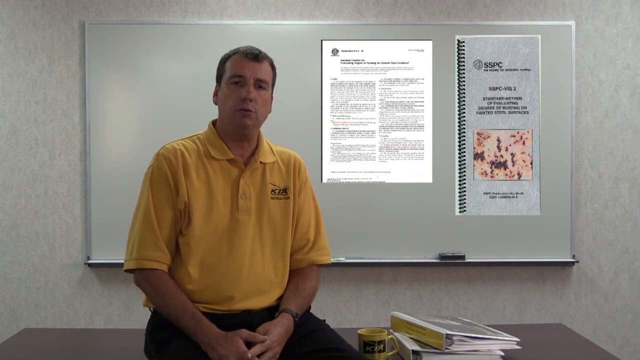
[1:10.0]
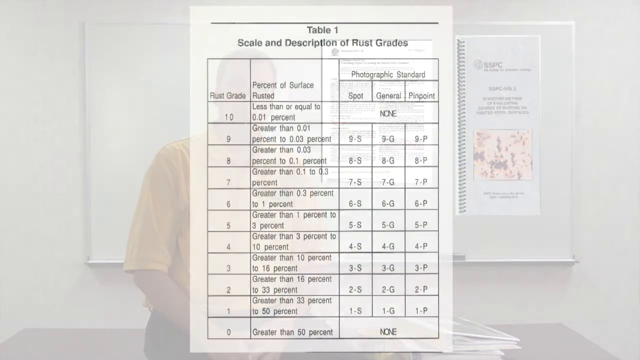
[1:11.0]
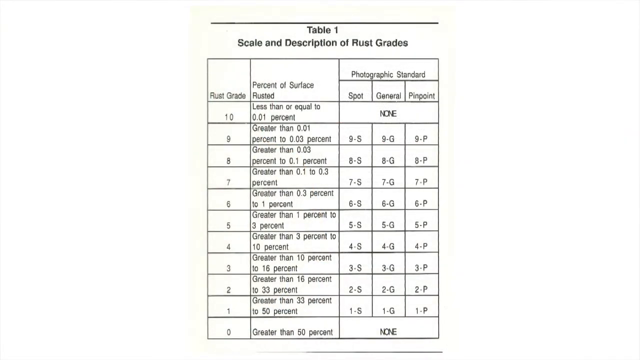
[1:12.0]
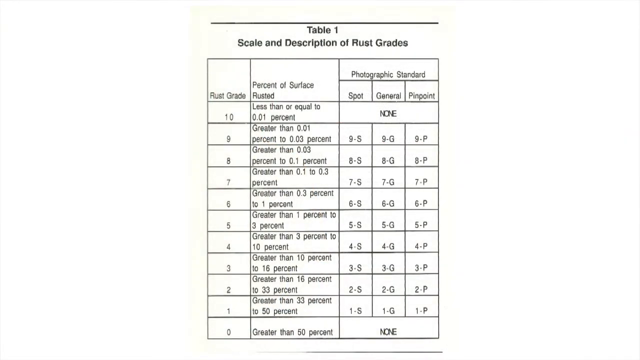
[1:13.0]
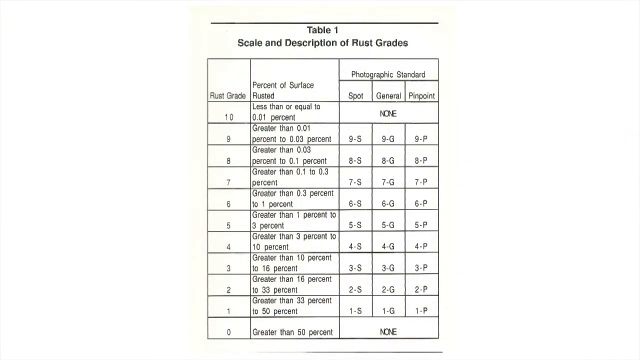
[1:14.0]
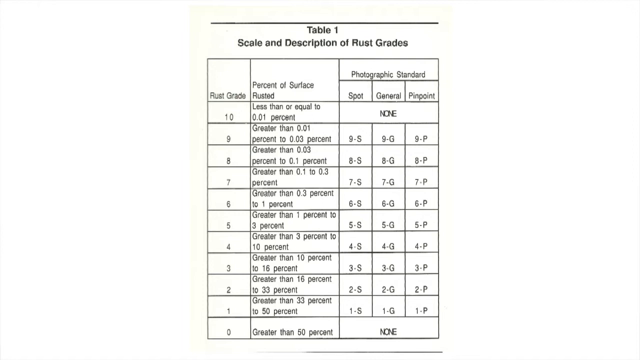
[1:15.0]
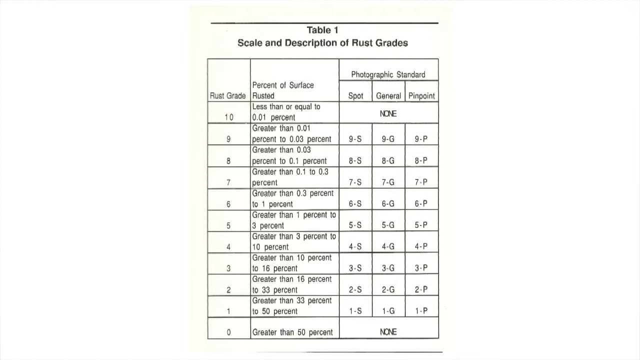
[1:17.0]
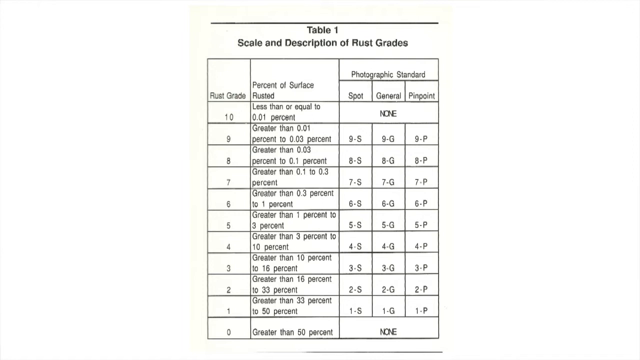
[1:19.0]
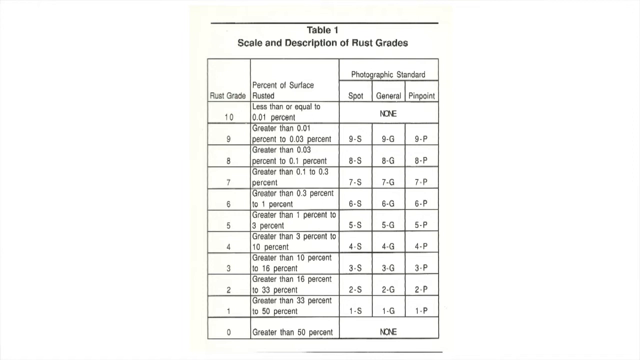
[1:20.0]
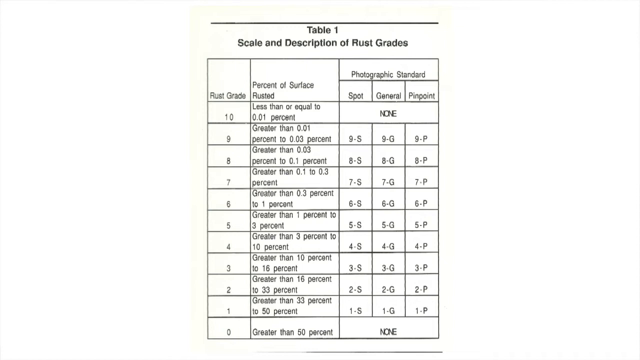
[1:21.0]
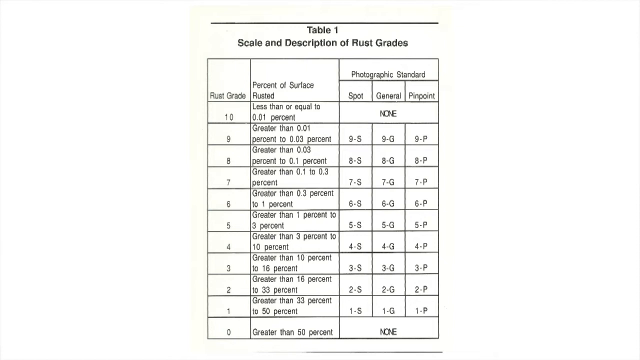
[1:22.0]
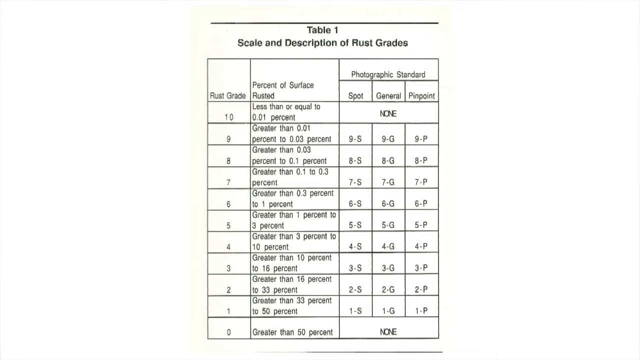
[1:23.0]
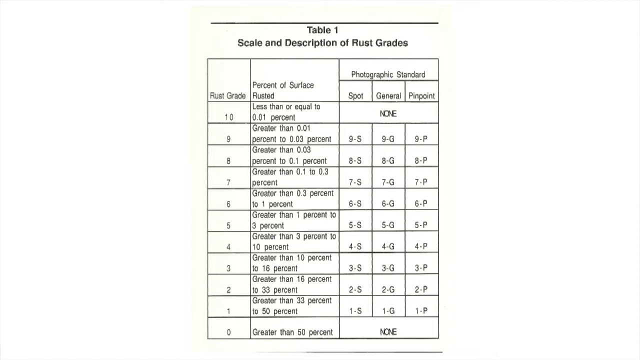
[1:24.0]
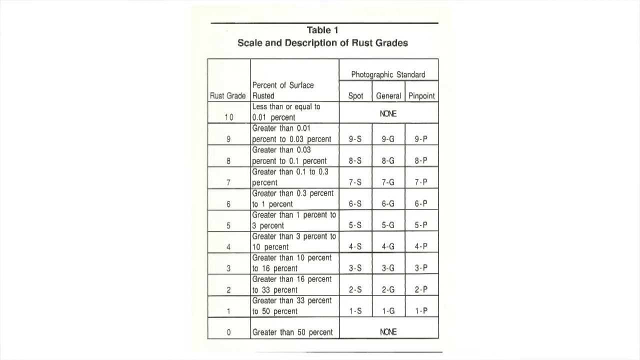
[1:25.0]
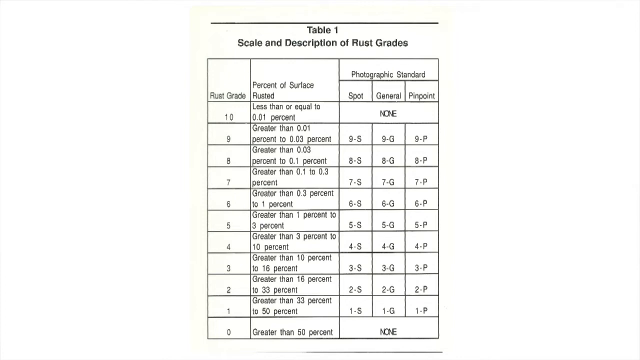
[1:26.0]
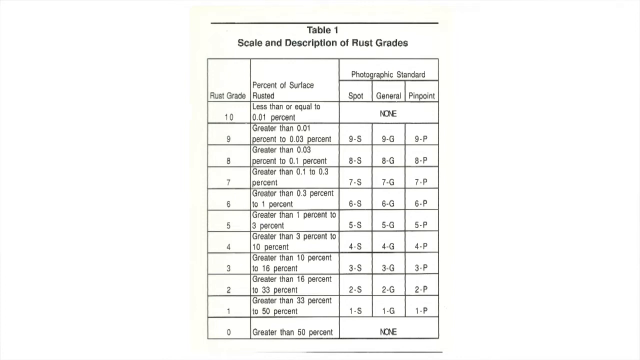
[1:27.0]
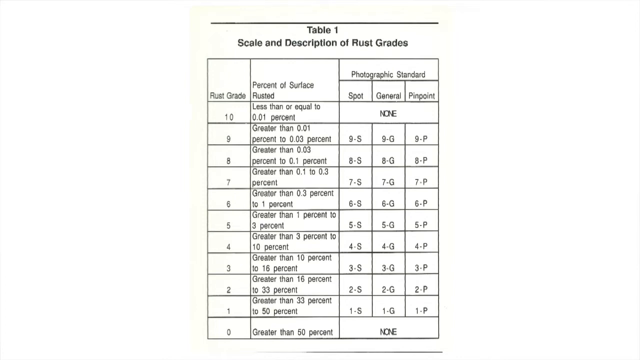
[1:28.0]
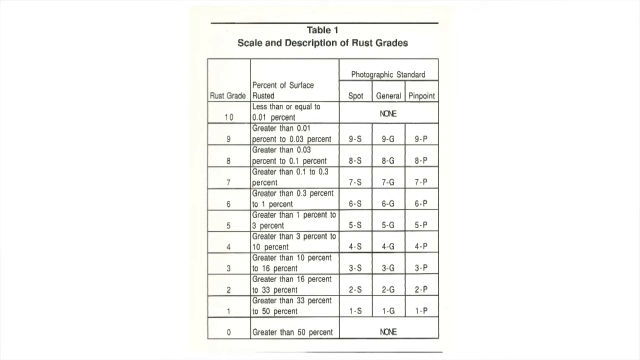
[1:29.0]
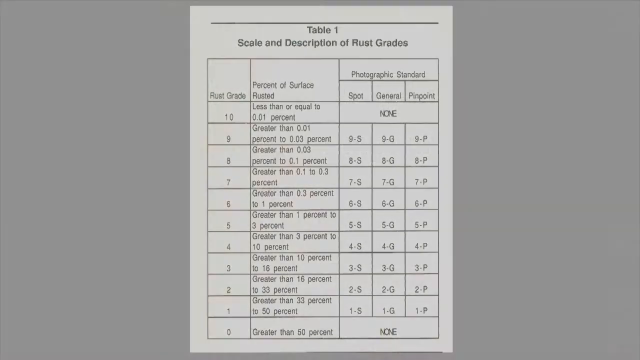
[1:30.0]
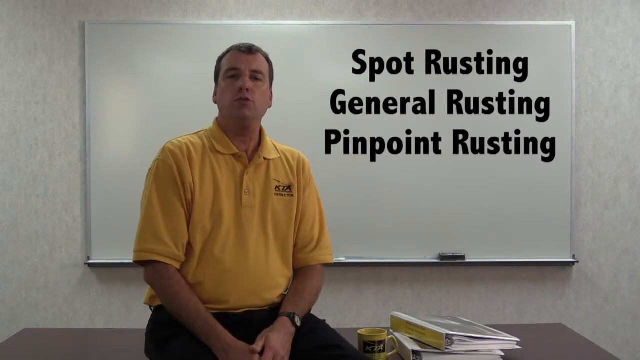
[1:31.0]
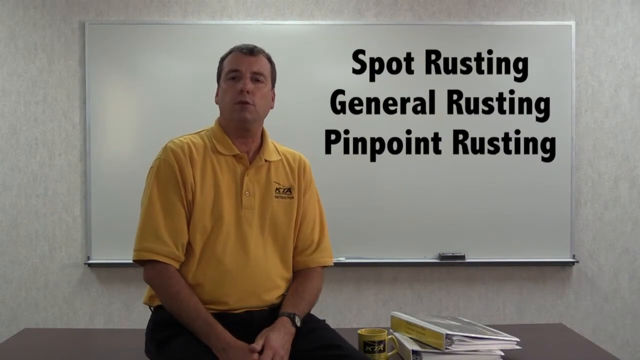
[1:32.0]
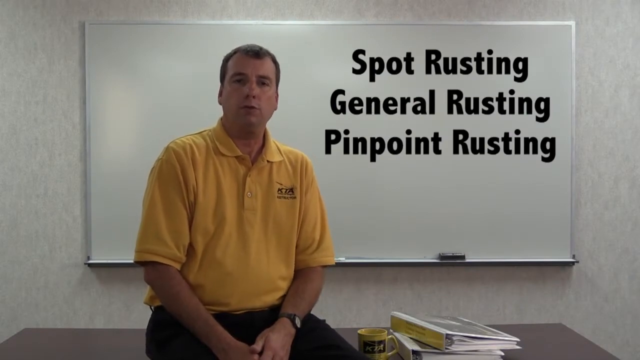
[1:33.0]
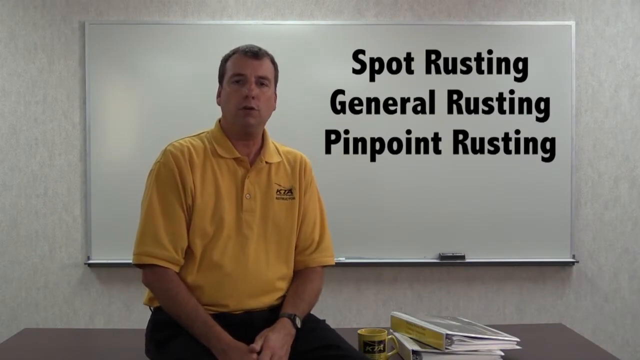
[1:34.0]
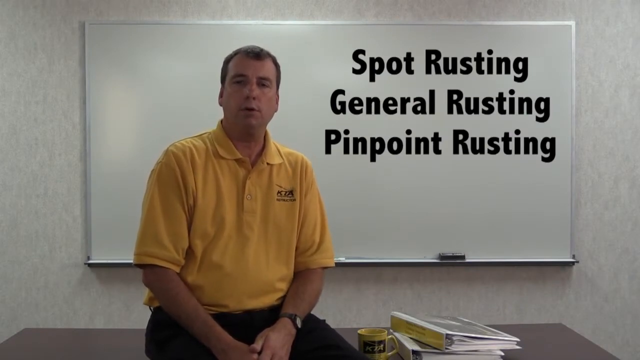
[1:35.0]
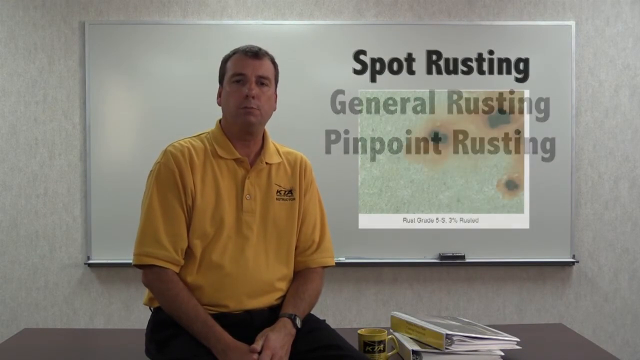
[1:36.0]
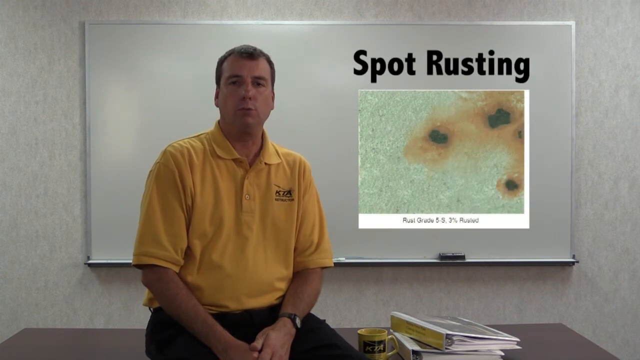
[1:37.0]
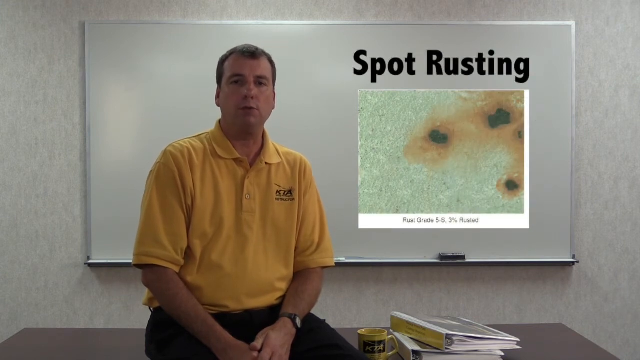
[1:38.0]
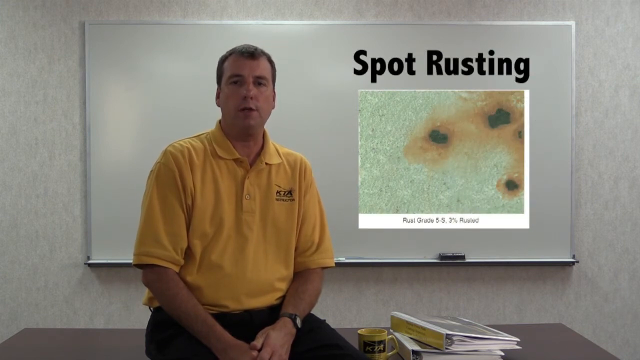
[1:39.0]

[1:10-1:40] A table of the scale and description of rusting grades is shown, with grade 10 listed at a percentage of surface rusting of 0.001. The photographic standards are divided into spot, general and pinpoint, with grades 9, 8, 7 and 6 going down the table as the photographic standards go down. Examples of spot rusting, general rusting over the whole surface, and pinpoint rusting occurring at pinpoints are shown.